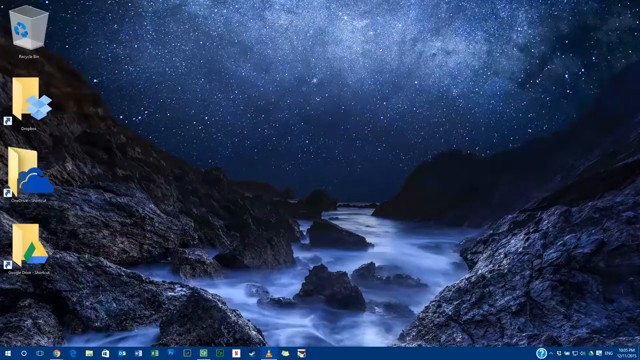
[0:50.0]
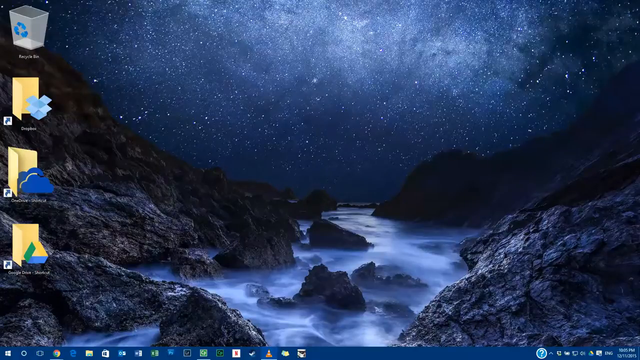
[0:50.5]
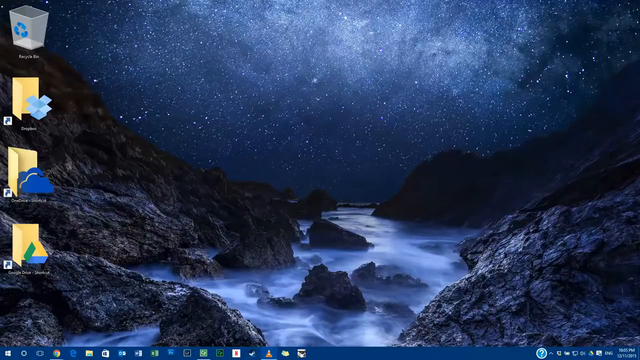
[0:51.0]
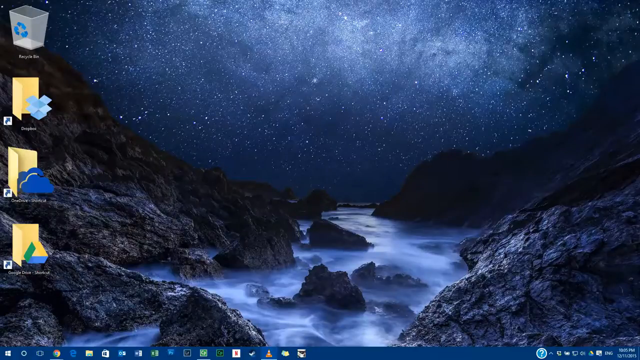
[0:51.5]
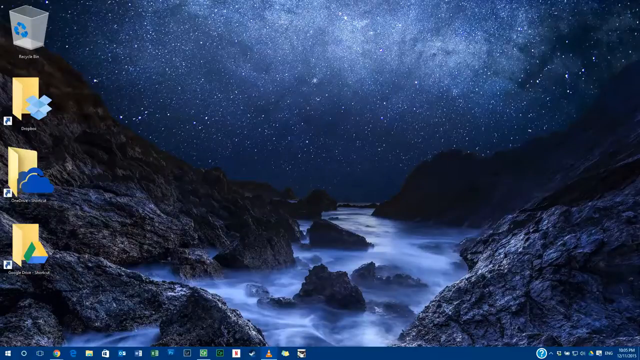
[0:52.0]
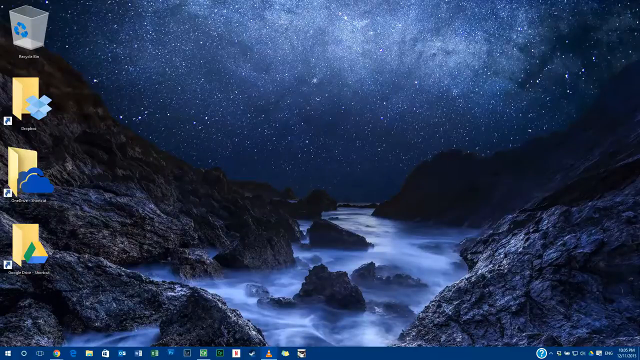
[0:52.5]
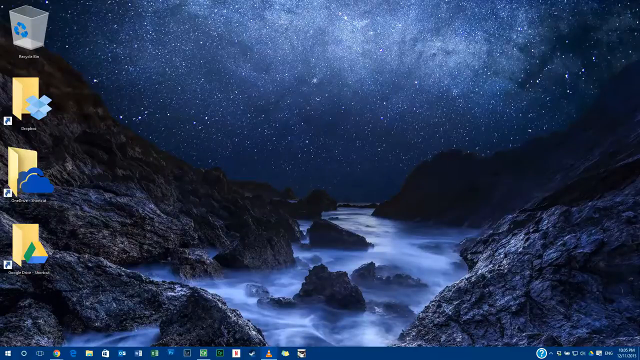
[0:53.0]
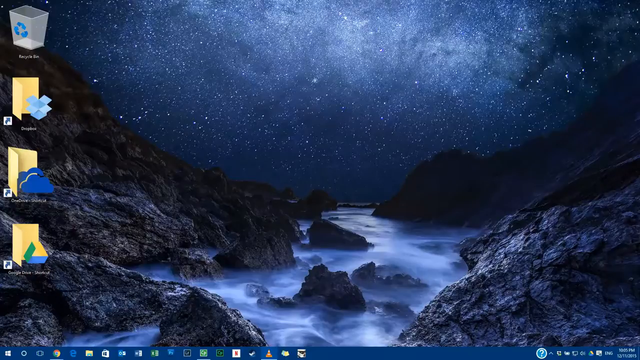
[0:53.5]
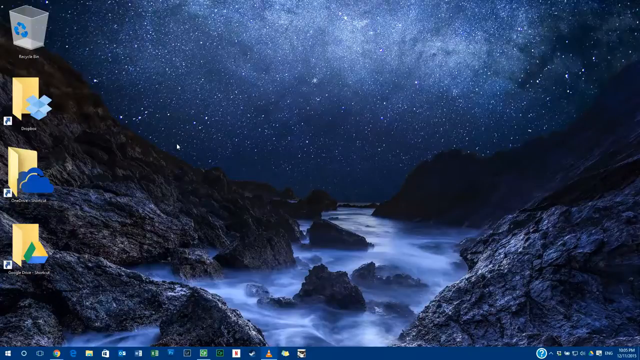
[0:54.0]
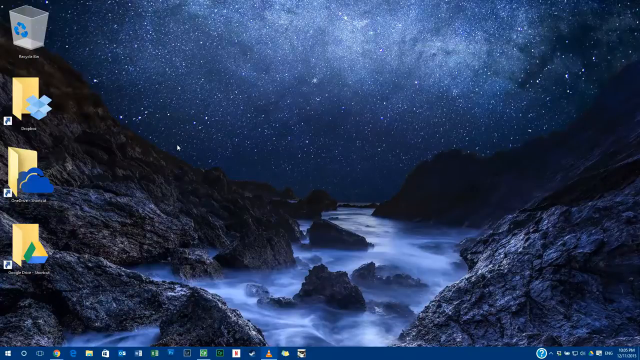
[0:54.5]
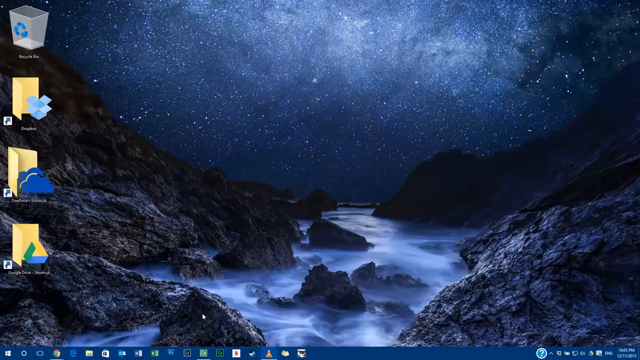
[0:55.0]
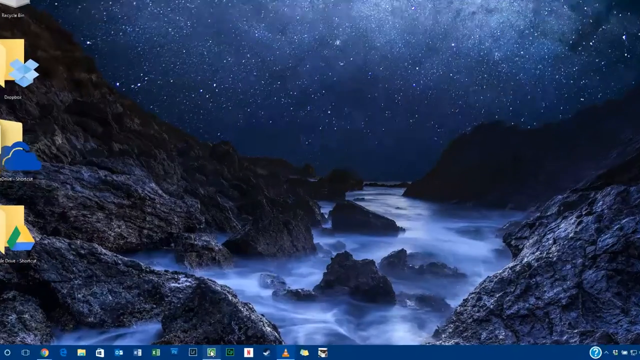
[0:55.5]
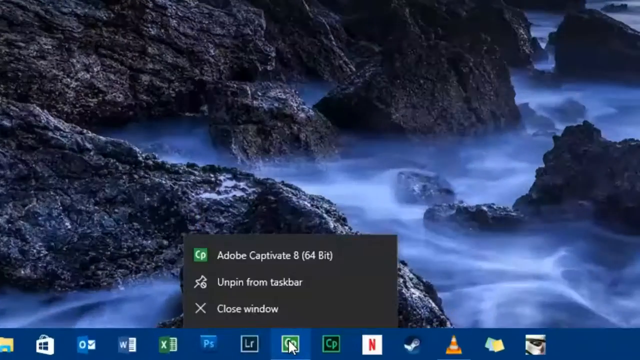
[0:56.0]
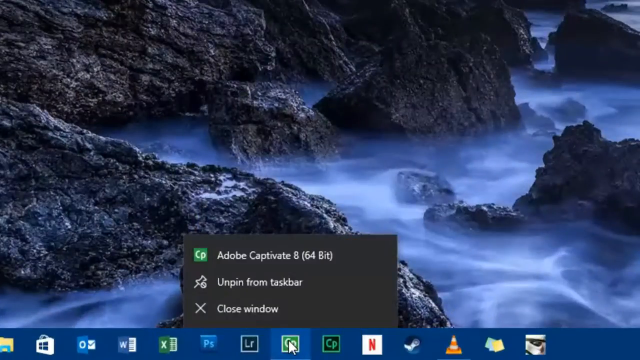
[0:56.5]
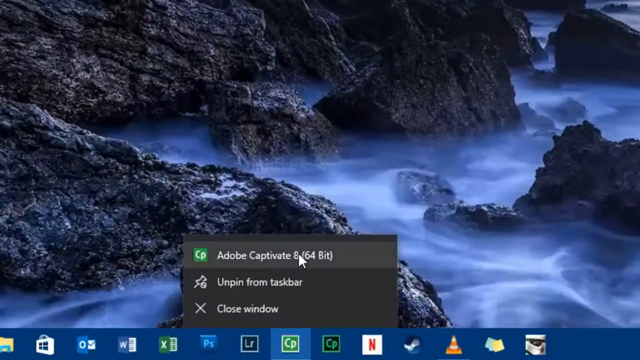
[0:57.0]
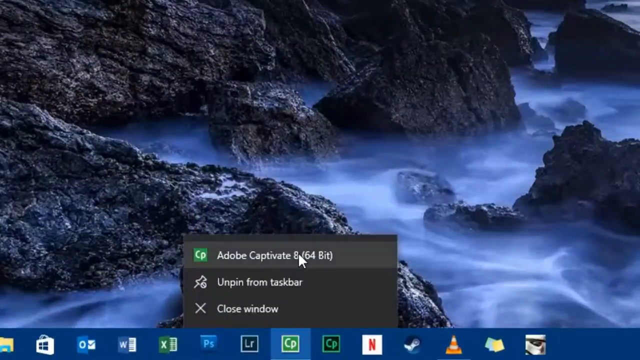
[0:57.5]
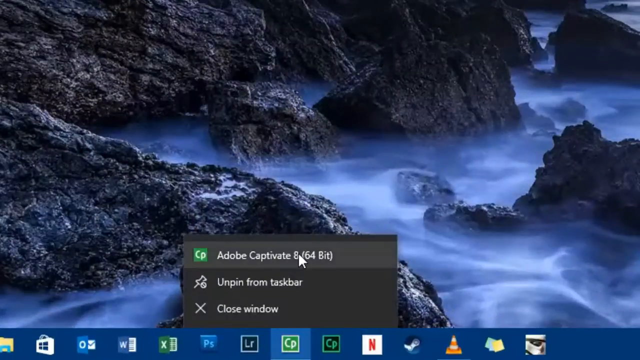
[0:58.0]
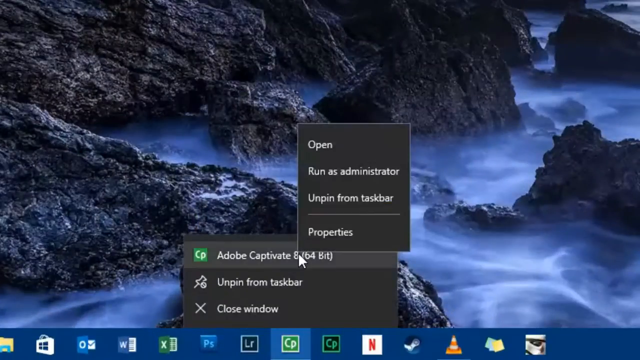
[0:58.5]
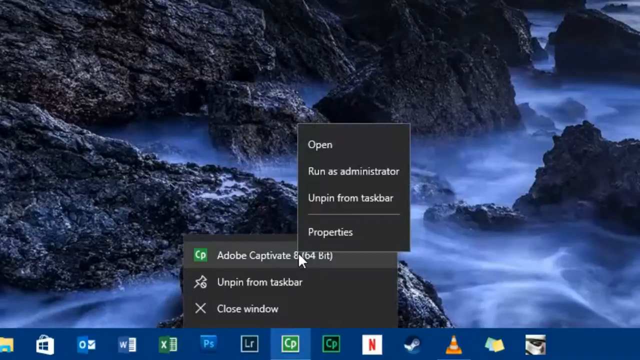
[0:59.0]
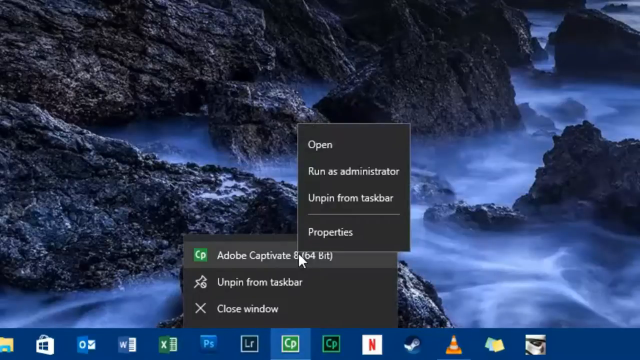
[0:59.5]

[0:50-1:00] The screen shows mountains with a river flowing through them, splashing water against rocks in the water. The area is very dark, with stars in the sky lighting up the whole area, creating a serene image that looks almost like a painting. This is the background of the desktop shown in the video.